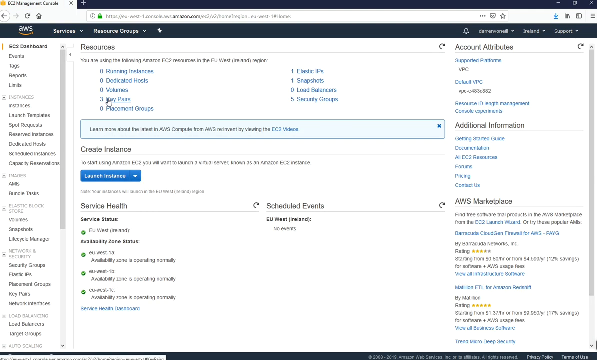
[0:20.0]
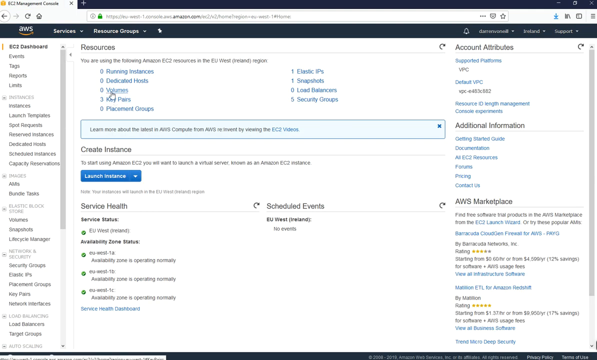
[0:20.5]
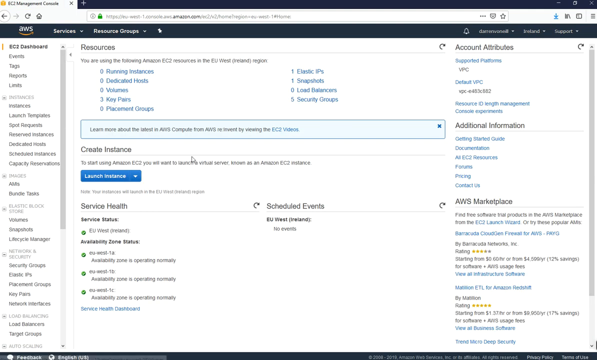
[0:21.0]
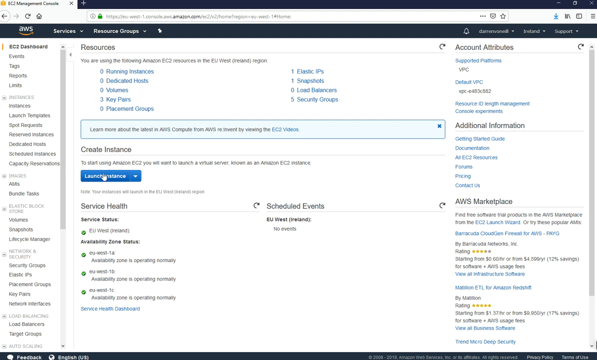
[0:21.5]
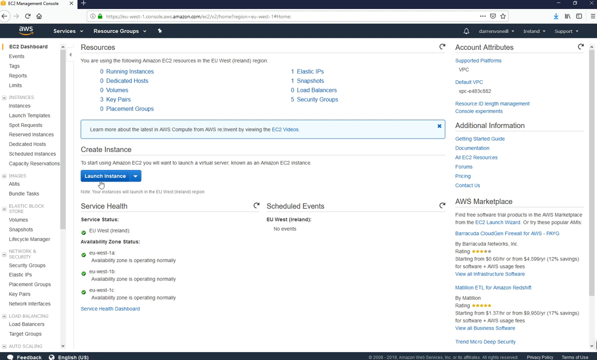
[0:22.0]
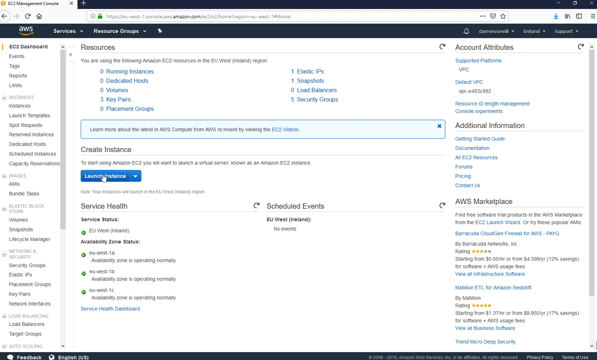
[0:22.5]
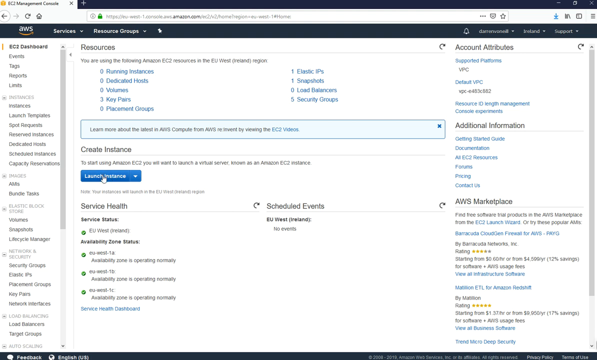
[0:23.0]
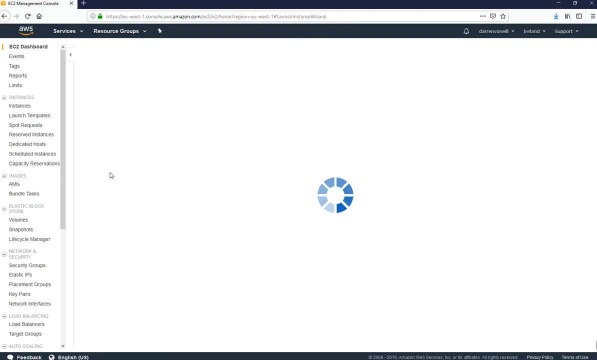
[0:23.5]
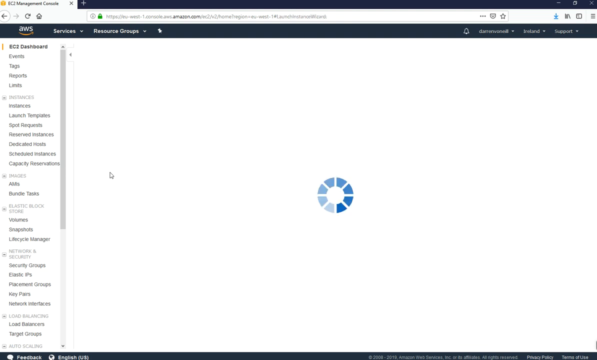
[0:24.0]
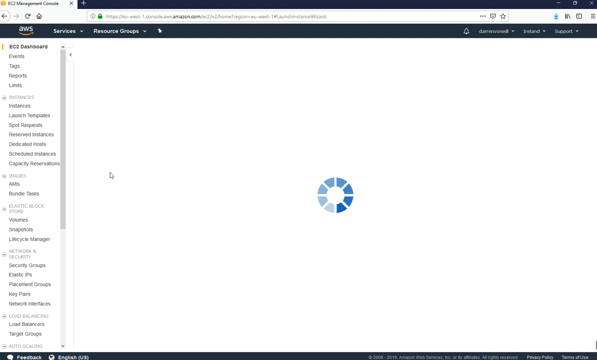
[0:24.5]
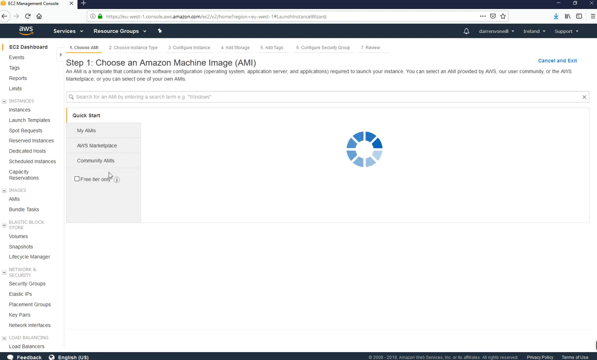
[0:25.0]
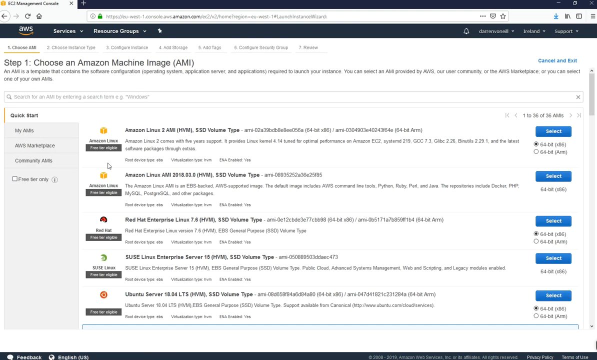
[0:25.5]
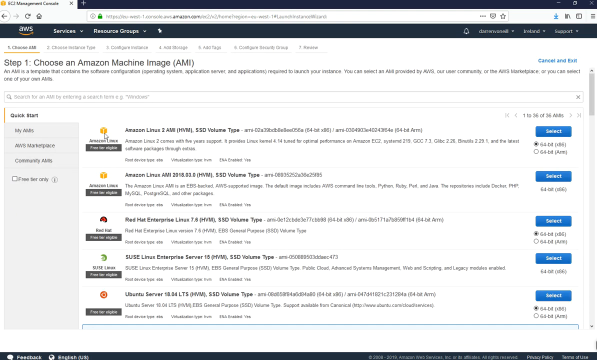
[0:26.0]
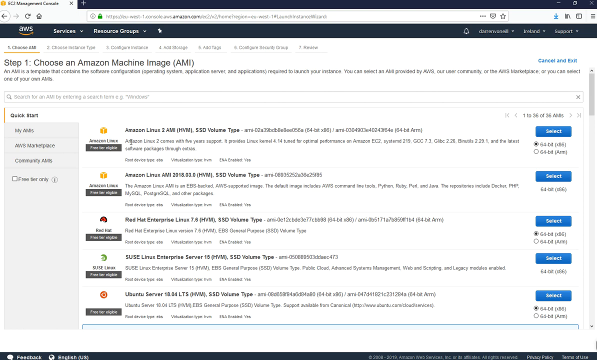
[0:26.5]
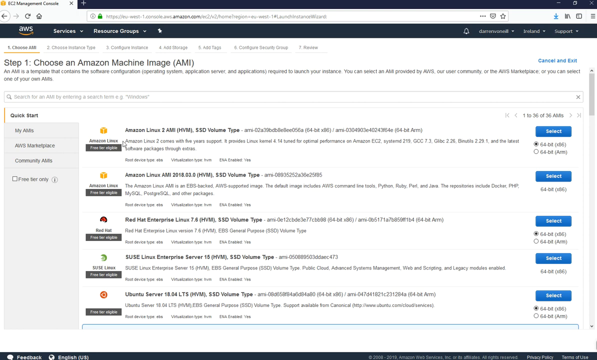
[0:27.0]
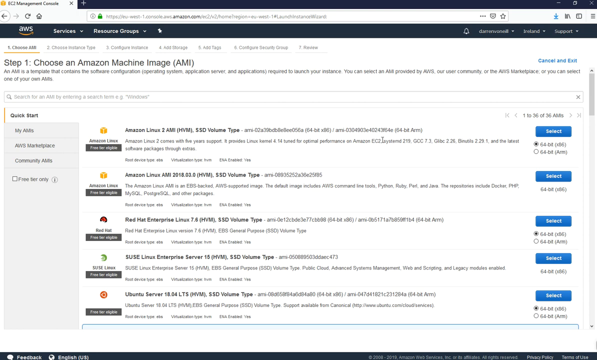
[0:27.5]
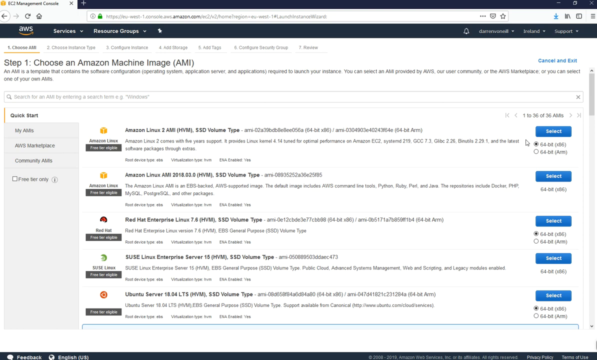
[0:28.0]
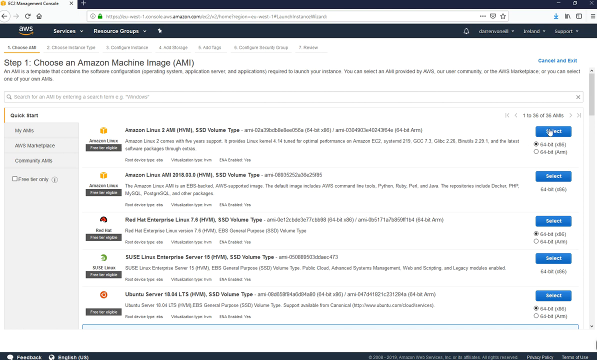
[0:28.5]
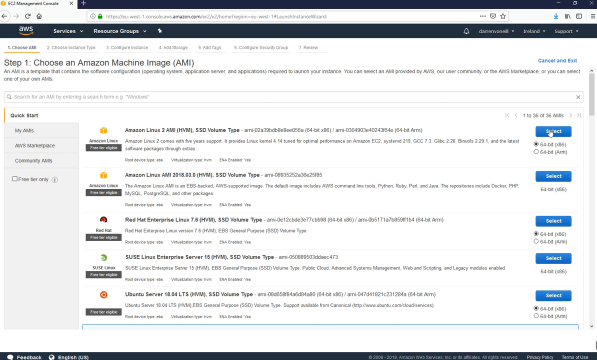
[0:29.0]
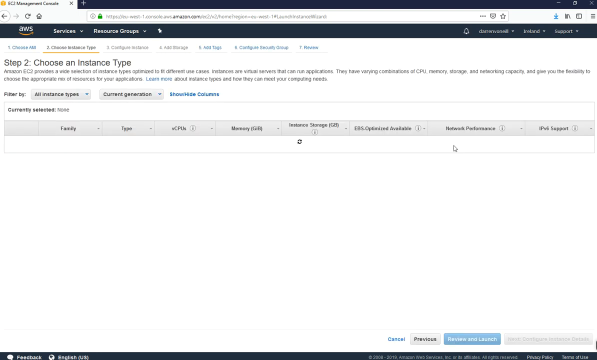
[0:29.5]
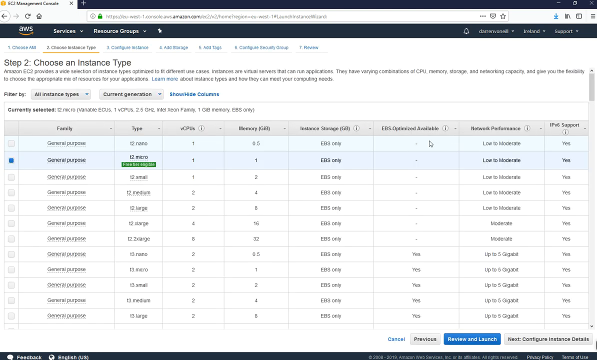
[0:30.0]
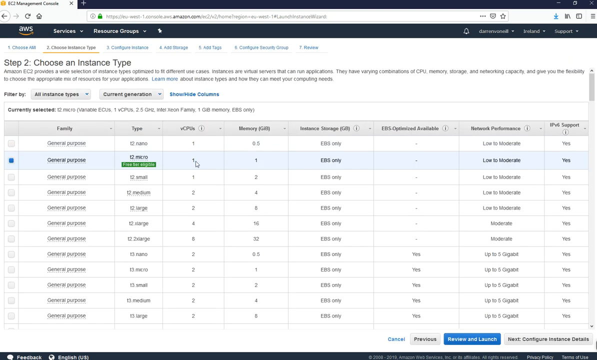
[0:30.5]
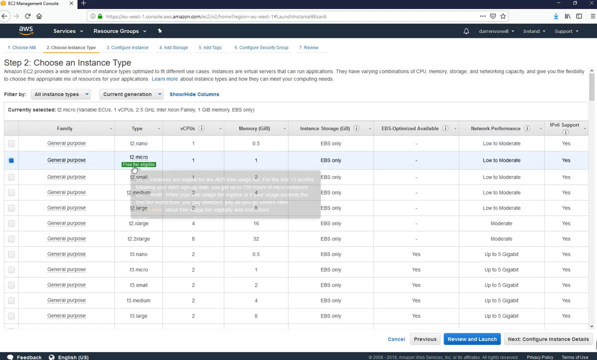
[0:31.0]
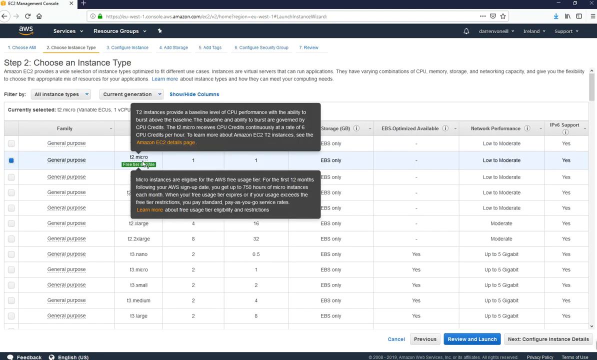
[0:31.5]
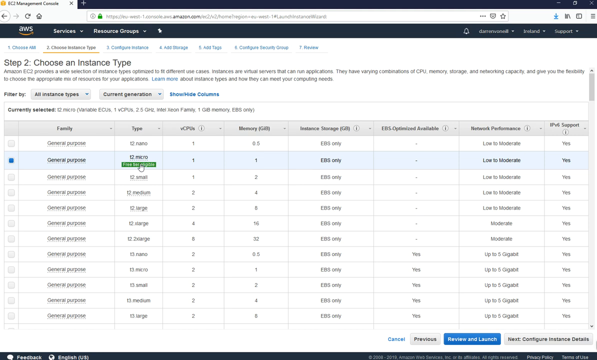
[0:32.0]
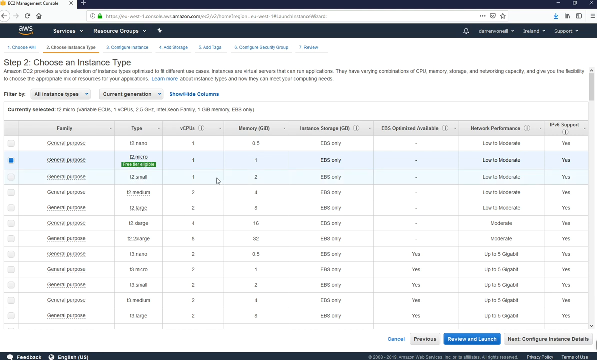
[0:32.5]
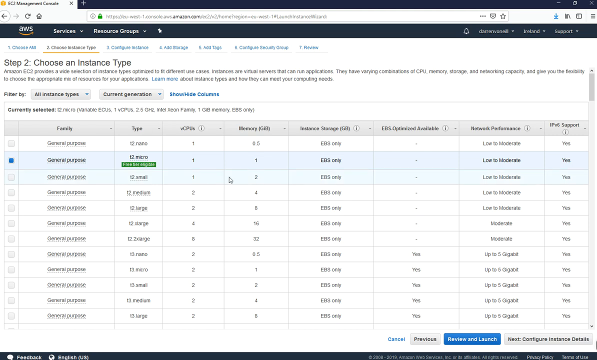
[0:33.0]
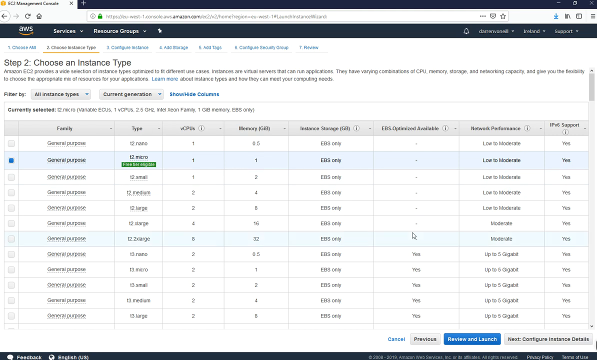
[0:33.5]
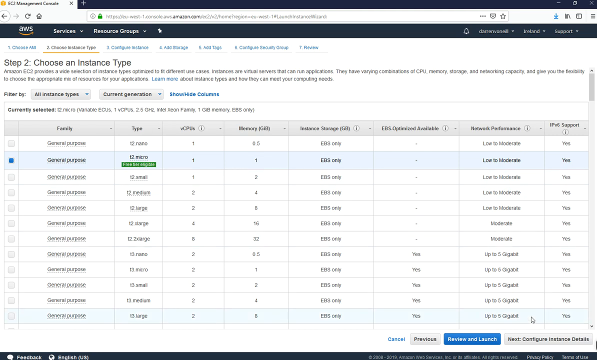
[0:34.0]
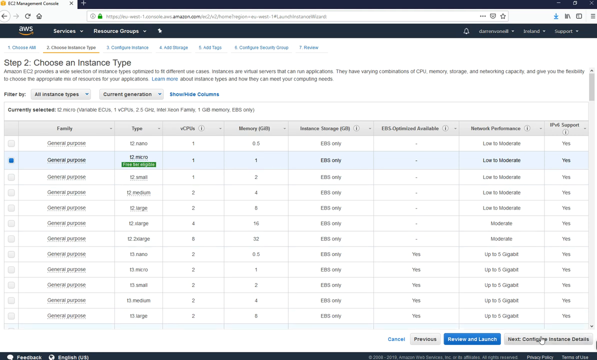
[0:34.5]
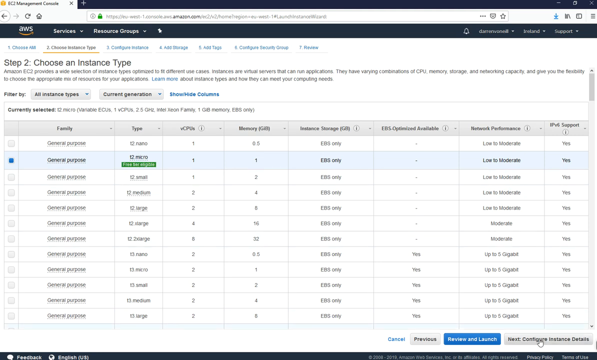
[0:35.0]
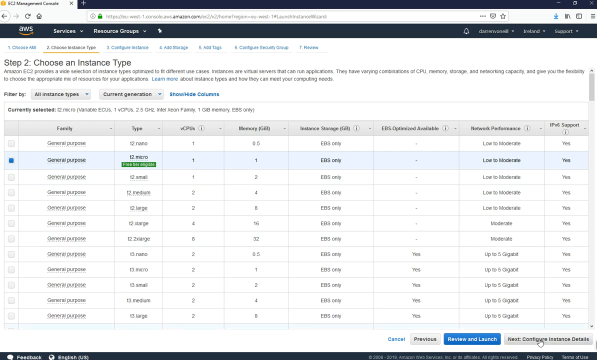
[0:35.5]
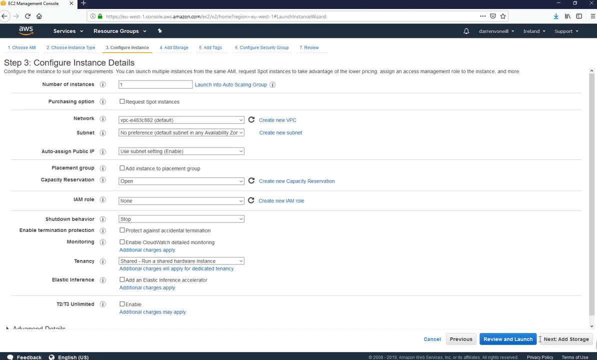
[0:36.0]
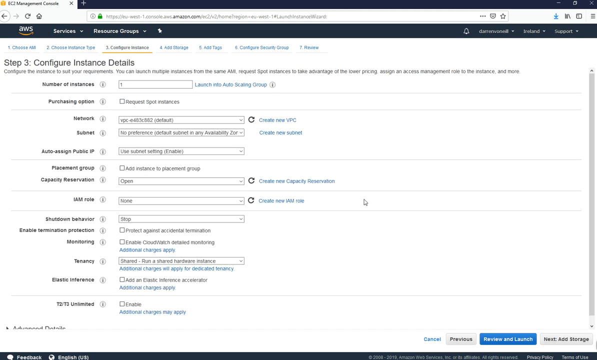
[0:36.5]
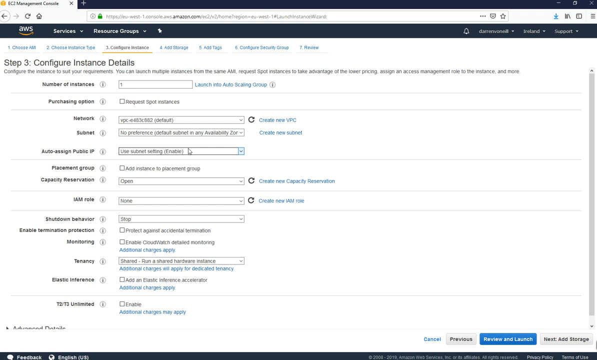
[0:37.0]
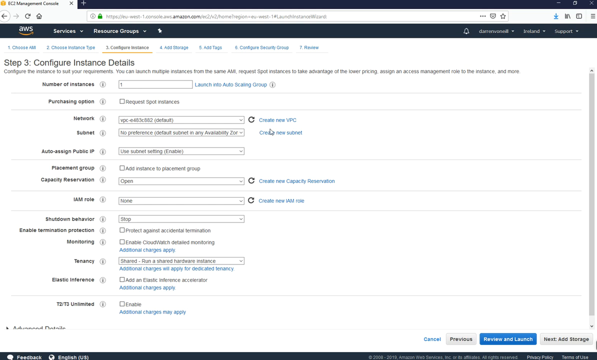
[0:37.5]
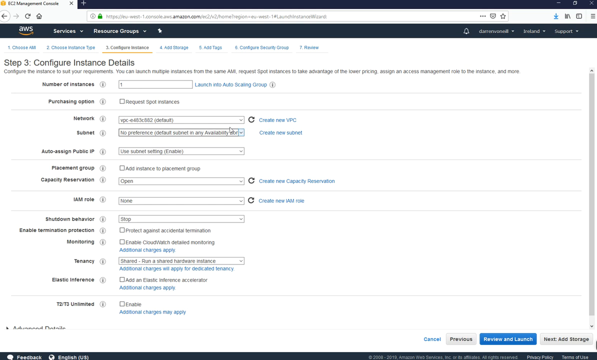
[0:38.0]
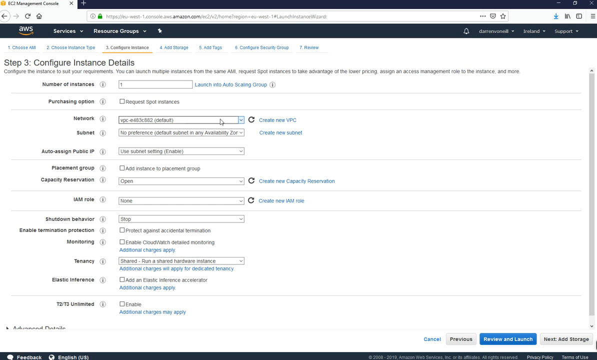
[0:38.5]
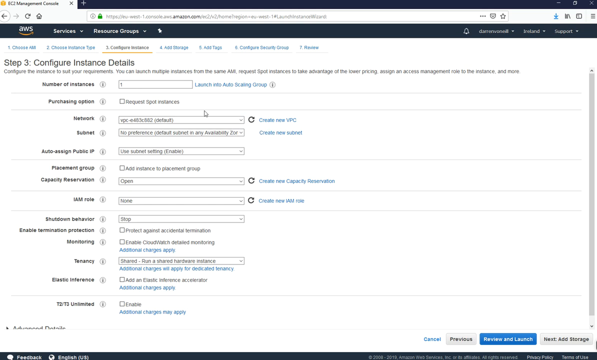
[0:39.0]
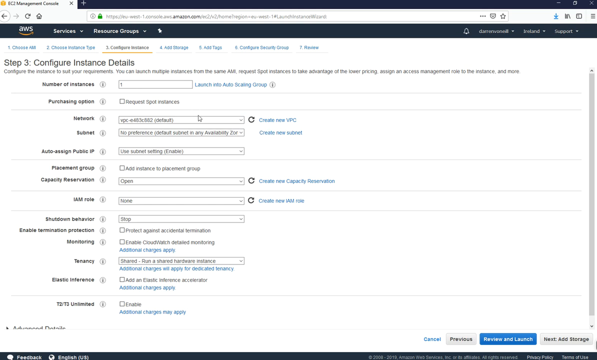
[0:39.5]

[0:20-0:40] The web page is a section of Amazon, a management console for AWS services. The cursor moves across the body of the page to a button for launch instance and clicks it. A page loads for step one, choose an Amazon machine image, AMI. Five listings appear in vertical order, each with a blue select button at its right, along with their names and short introductions. The cursor moves across the first entry and clicks its Select button. The page loads, showing a grid with multiple entries and sections, horizontal and vertical; the entries begin with general purpose and differ in the following columns. The cursor moves across the grid, clicks the next button, and then clicks a drop-down arrow.